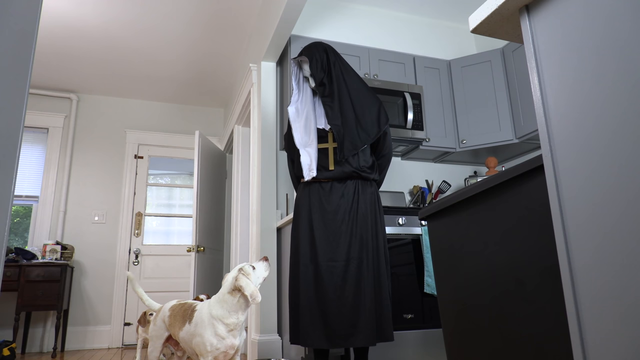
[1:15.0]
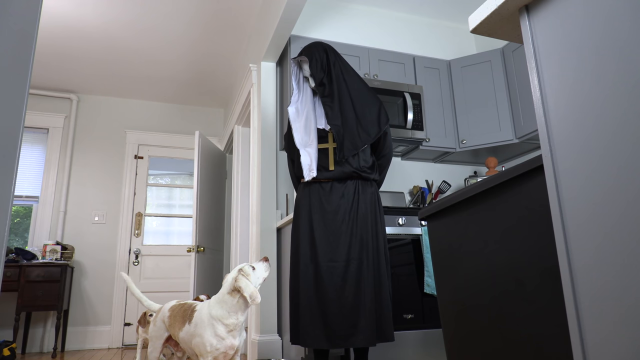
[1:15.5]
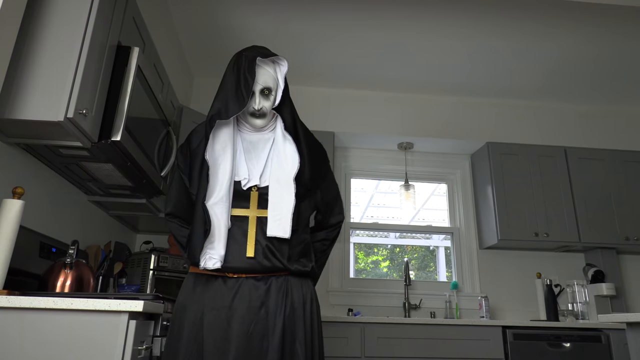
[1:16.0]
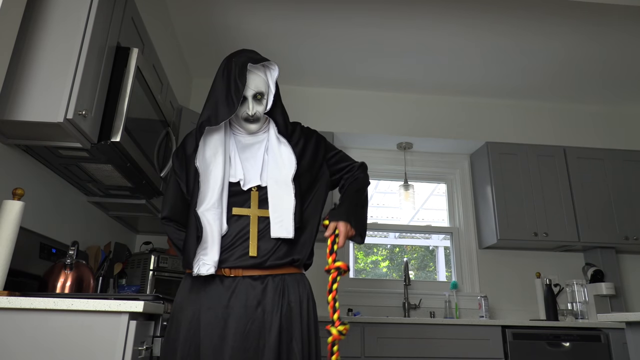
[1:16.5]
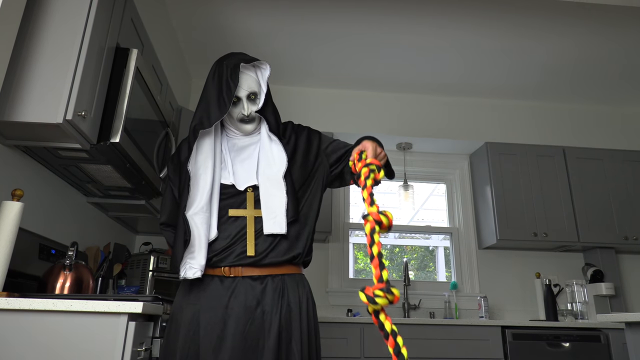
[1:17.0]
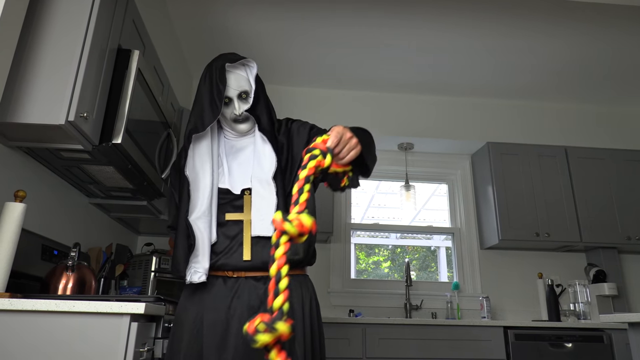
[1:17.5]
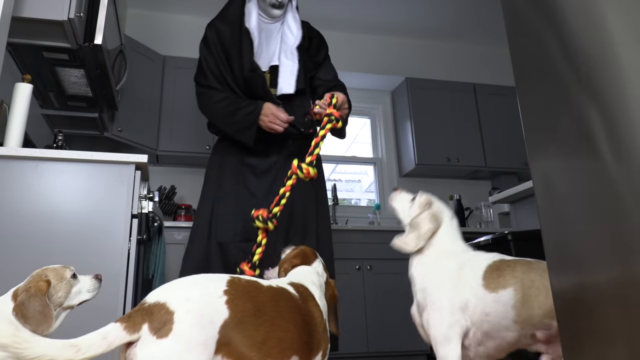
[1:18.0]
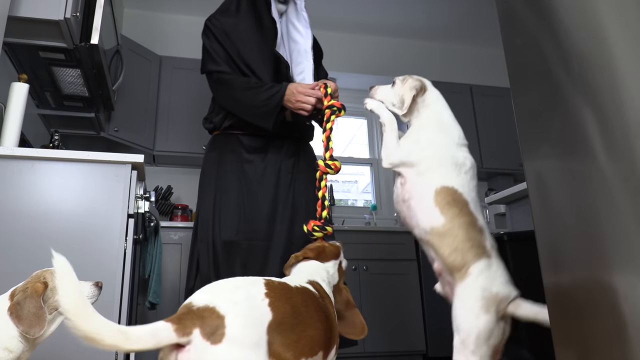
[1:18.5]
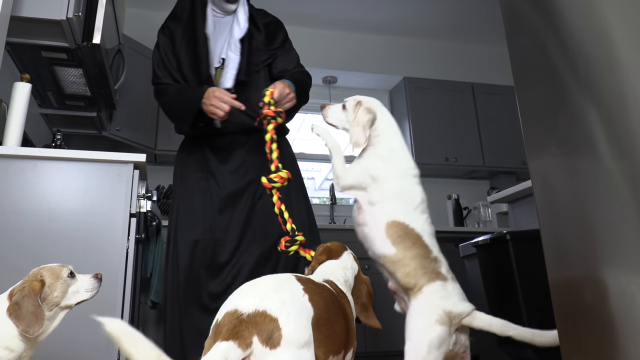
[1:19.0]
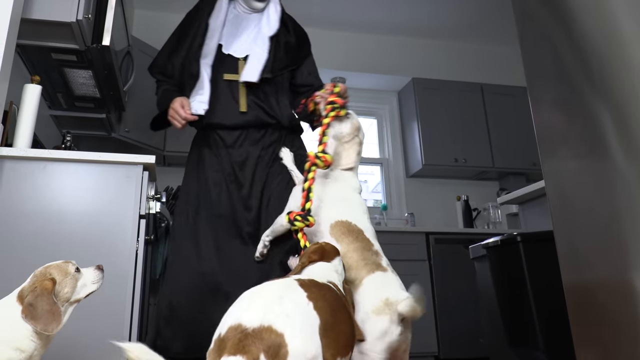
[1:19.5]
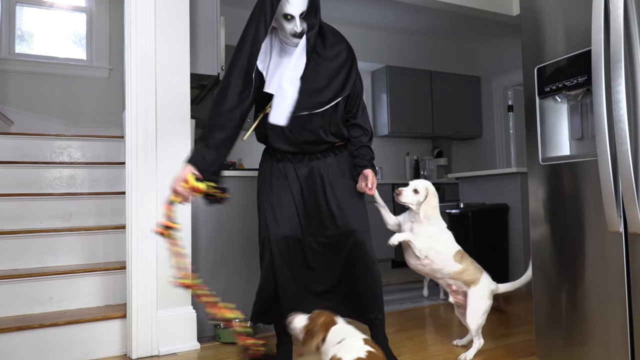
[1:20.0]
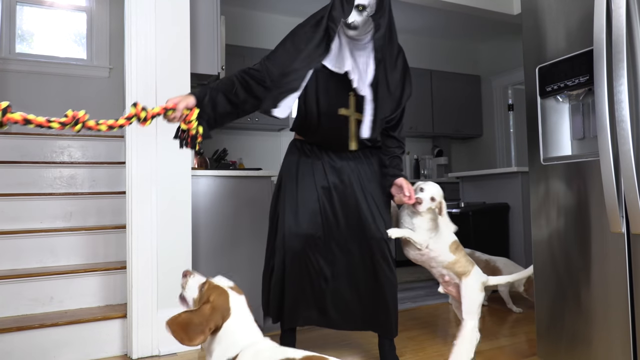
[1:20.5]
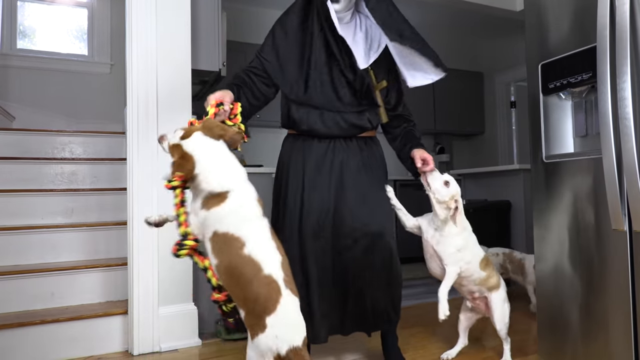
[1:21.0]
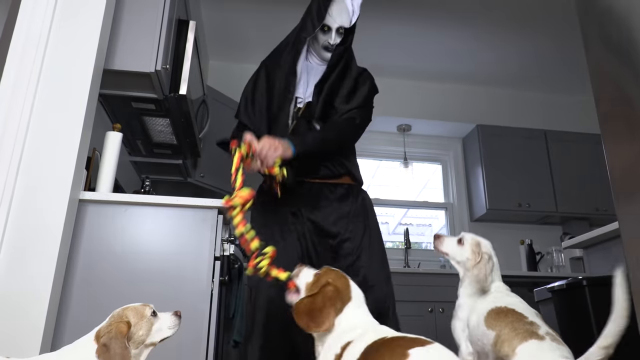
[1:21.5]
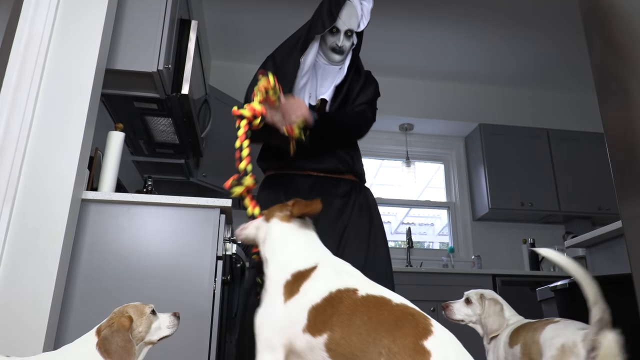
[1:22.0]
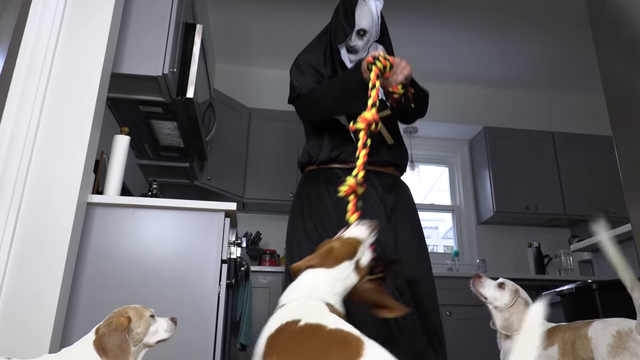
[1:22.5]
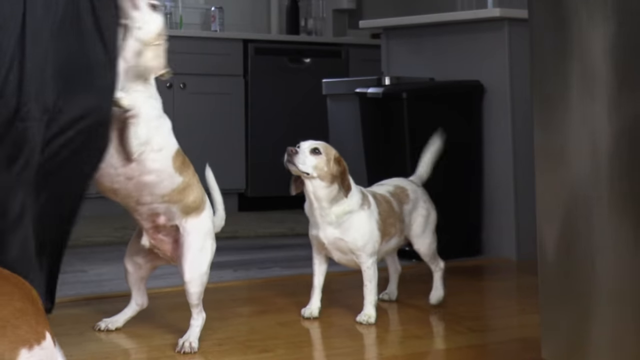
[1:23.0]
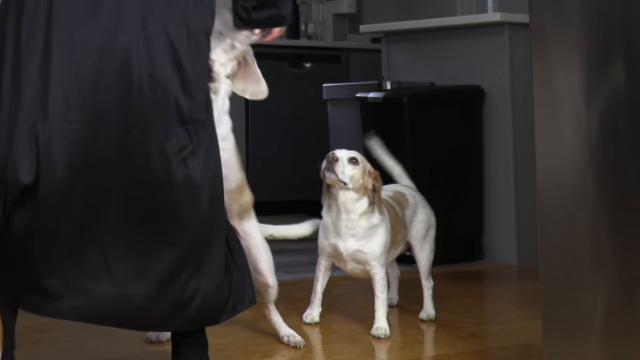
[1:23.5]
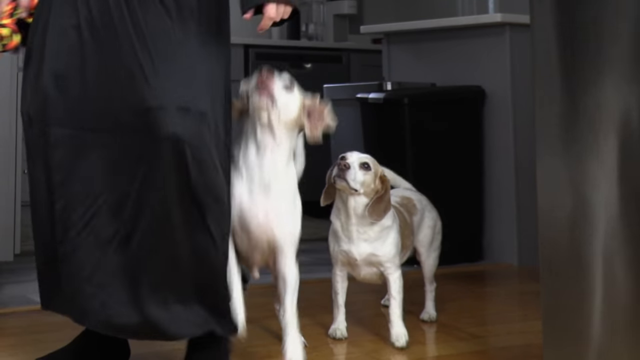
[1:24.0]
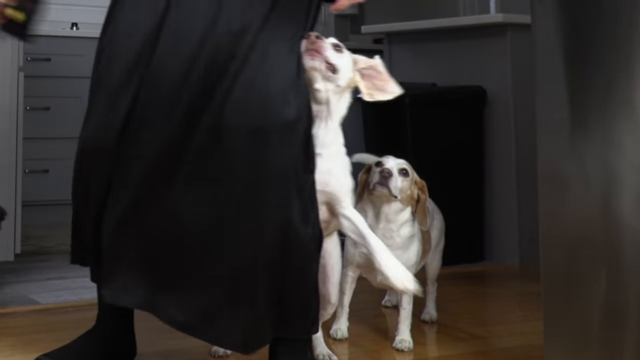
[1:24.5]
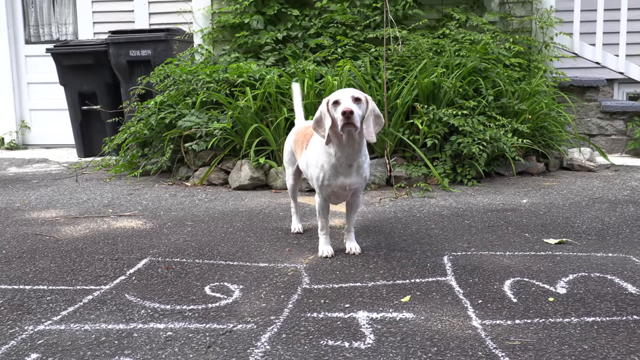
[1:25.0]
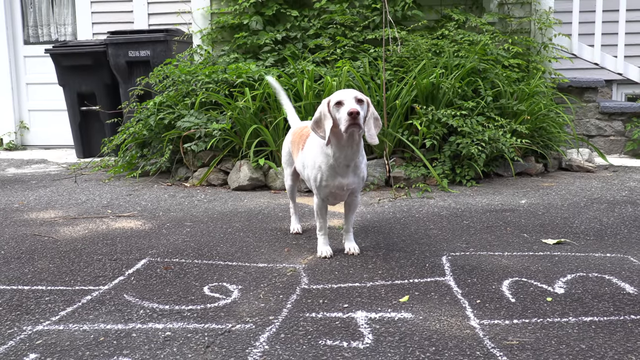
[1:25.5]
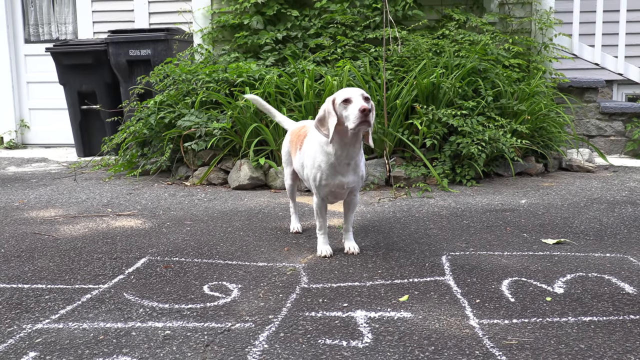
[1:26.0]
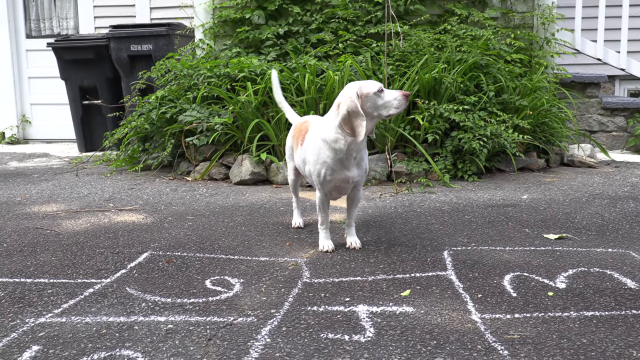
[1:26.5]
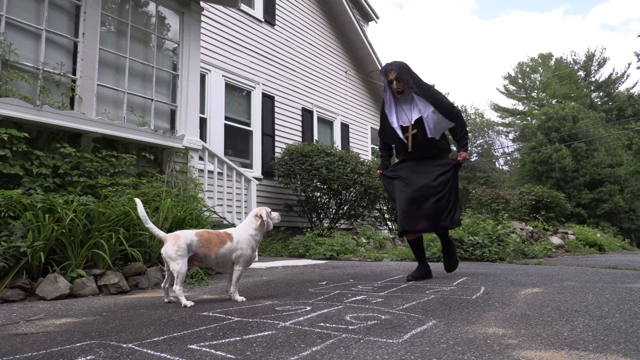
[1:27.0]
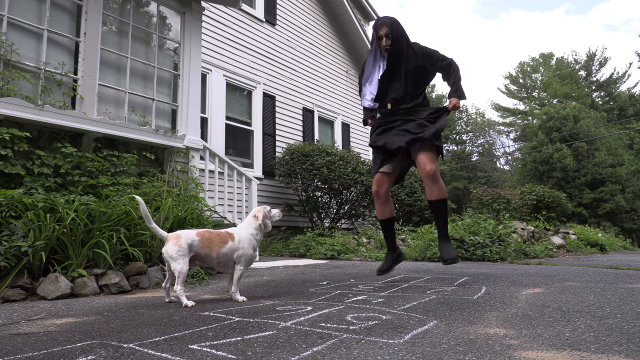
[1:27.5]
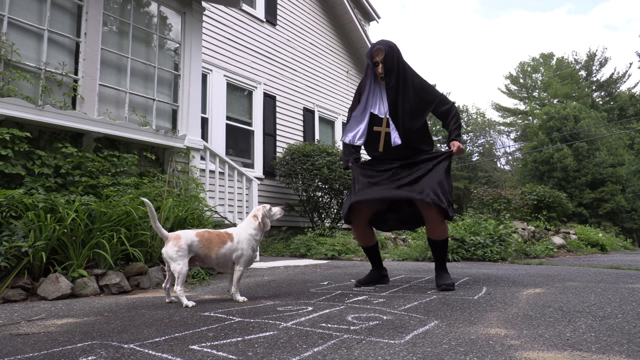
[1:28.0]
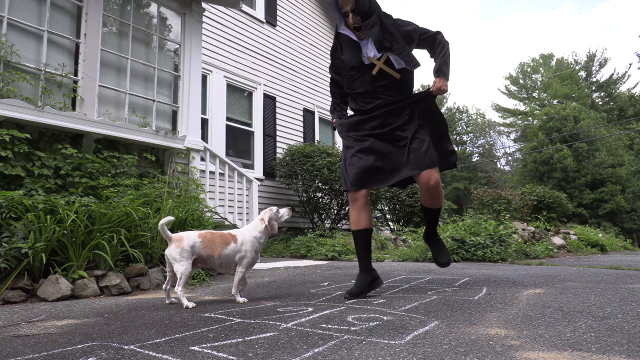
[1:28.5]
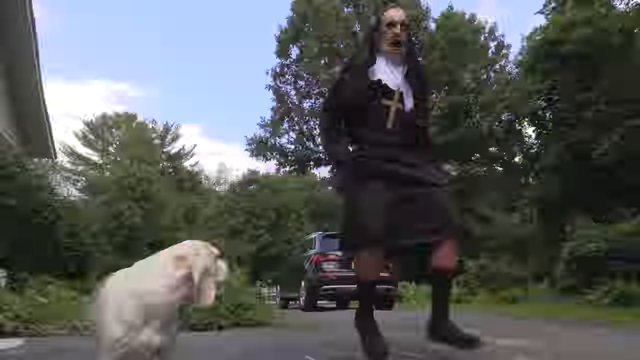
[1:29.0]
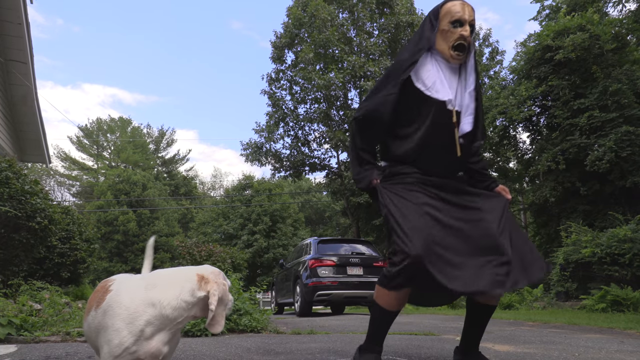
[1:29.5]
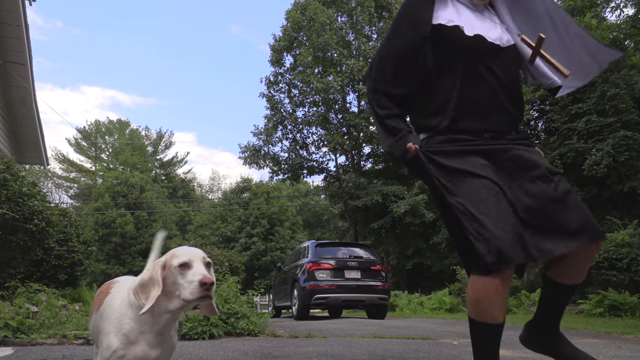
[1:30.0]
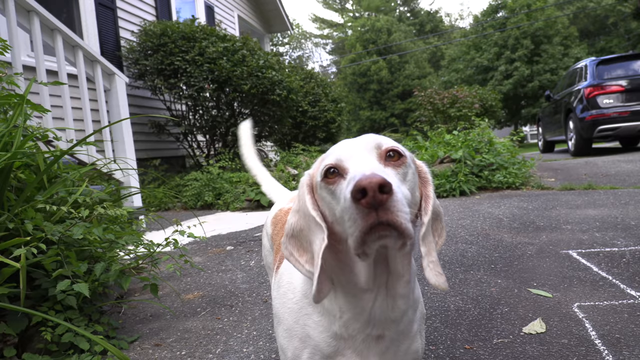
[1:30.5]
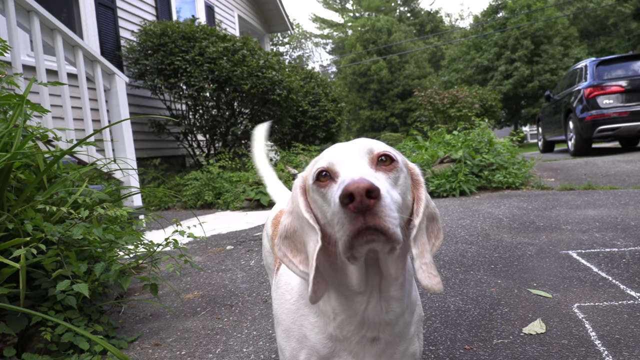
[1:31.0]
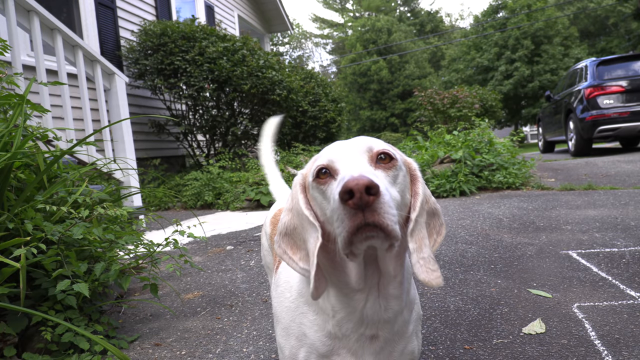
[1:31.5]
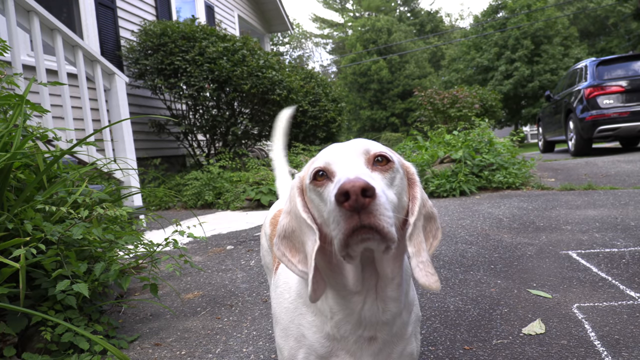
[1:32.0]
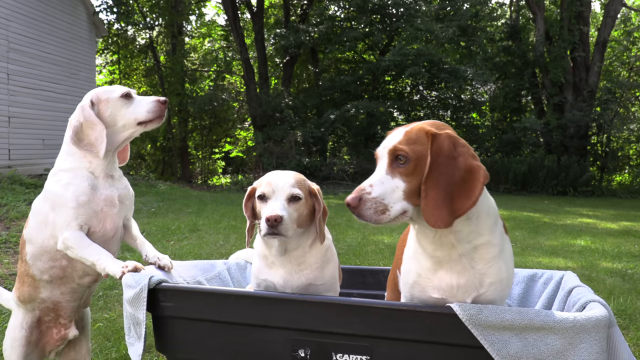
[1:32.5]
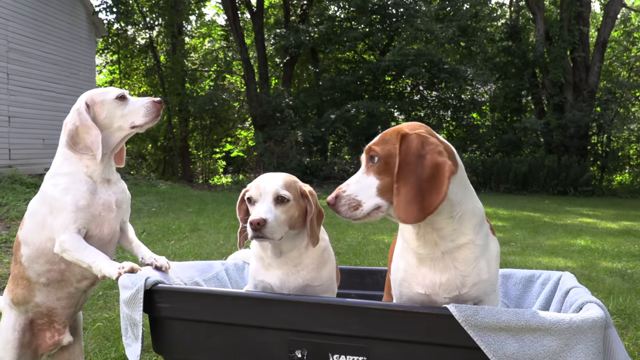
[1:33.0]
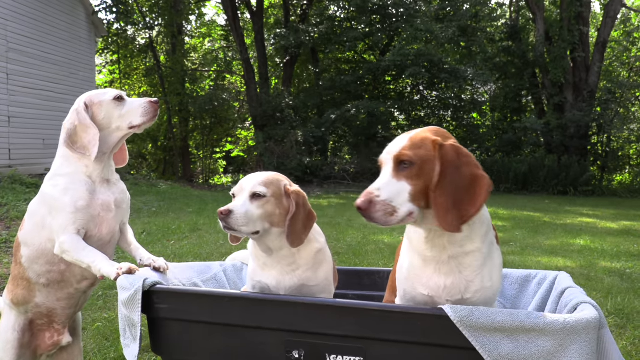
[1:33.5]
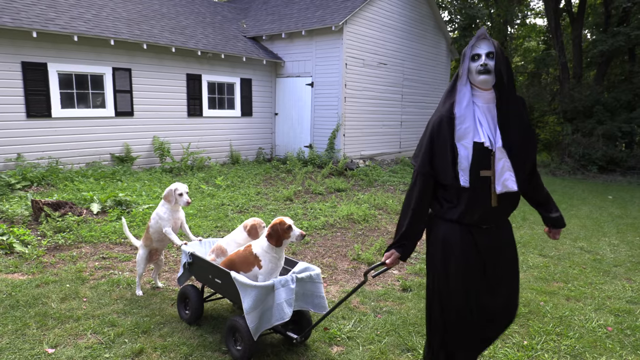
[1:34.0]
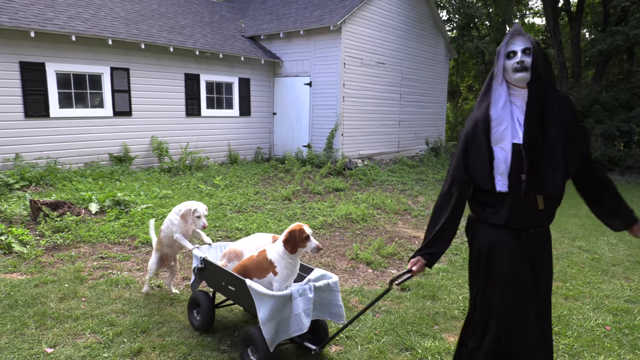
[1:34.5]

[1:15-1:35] As the demon nun and the dog with white ears look at each other in the kitchen, the demon nun reaches behind him and pulls out a big rope play toy for dogs, braided in black, bright yellow and orange. He lowers it toward the dogs, and all three dogs immediately and eagerly start playing with it as he swings it back and forth and does sort of a tug-of-war motion with them. The scene suddenly cuts outside, where the dog with white ears is standing on the asphalt in front of a bush, with hopscotch written on the ground in white chalk. He wags his tail as the demon nun plays hopscotch in front of him. Then all three dogs are in a wagon that the demon nun is pulling through the backyard.